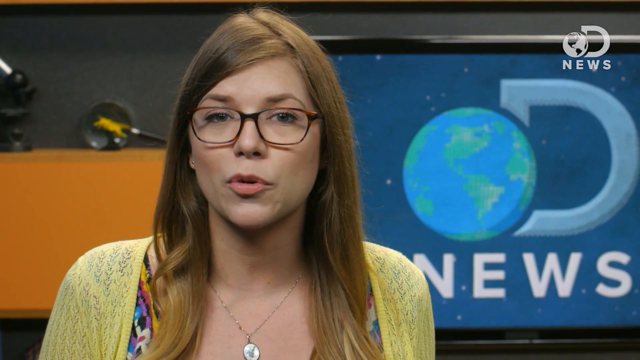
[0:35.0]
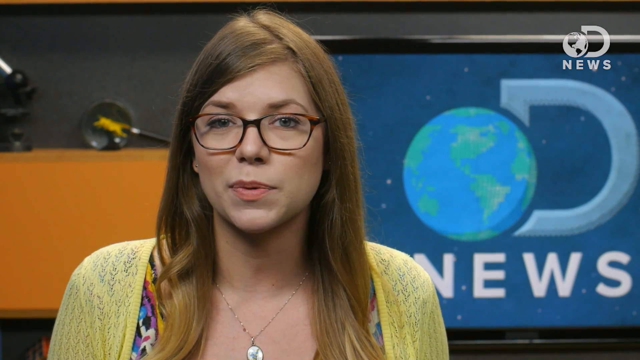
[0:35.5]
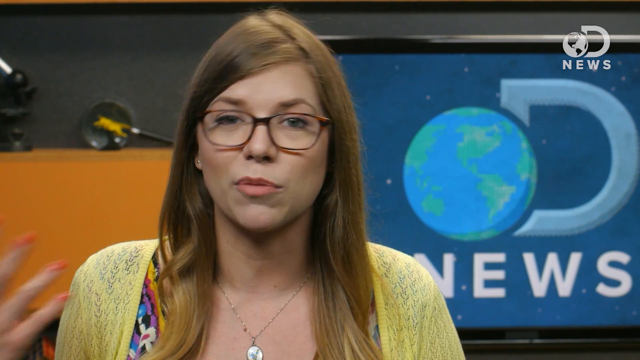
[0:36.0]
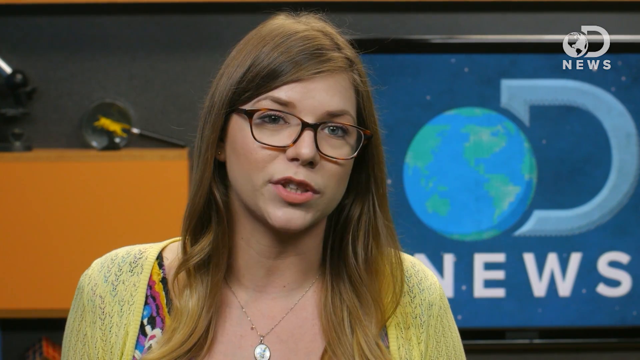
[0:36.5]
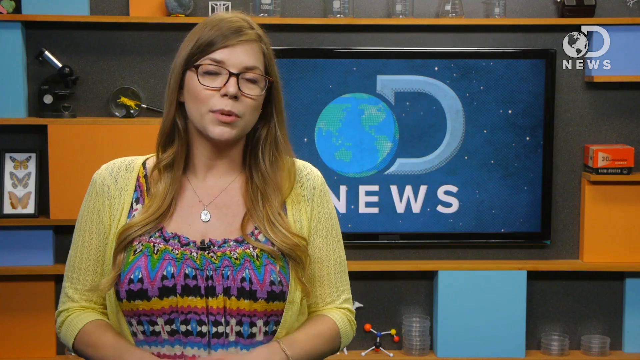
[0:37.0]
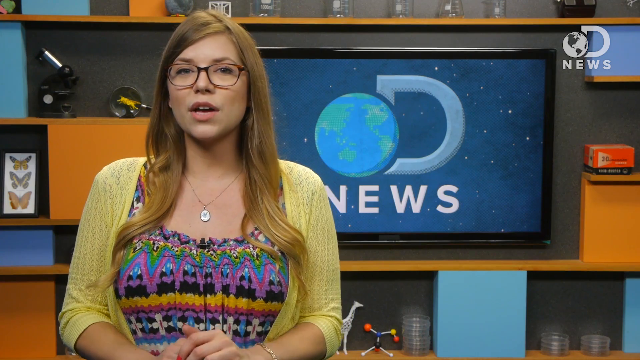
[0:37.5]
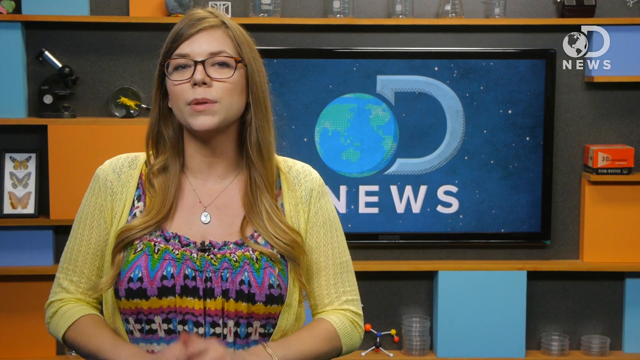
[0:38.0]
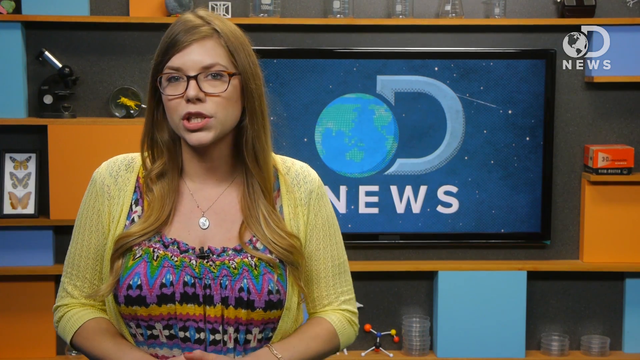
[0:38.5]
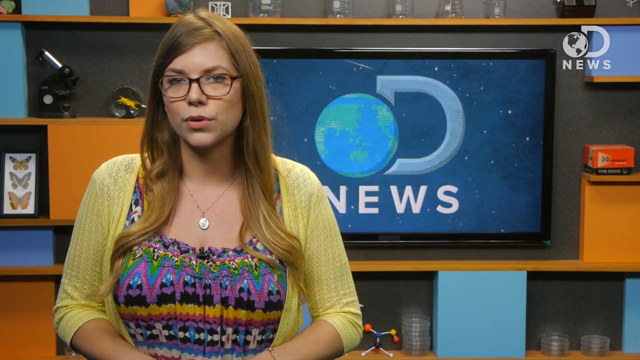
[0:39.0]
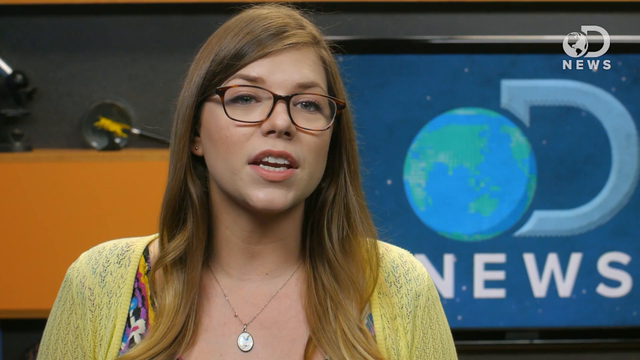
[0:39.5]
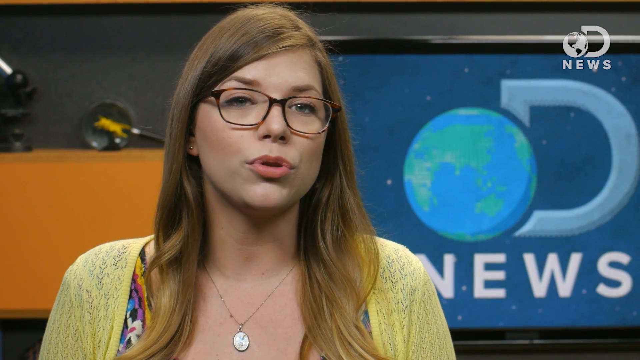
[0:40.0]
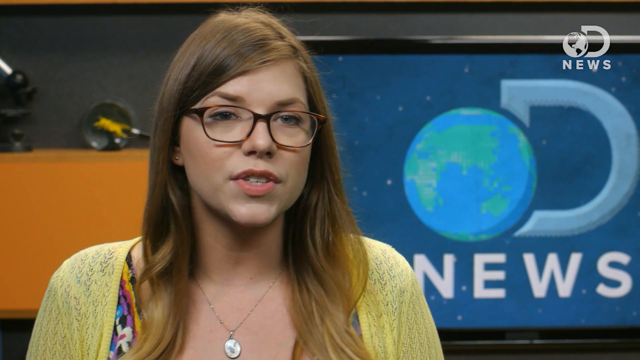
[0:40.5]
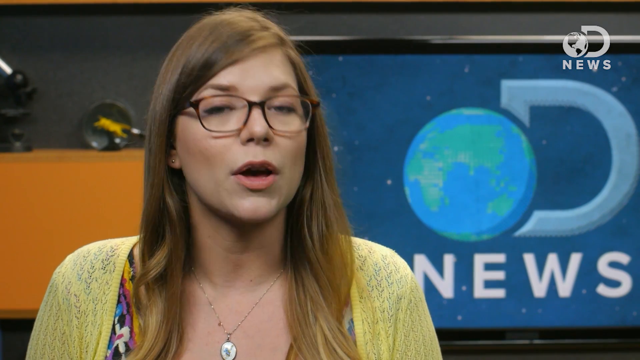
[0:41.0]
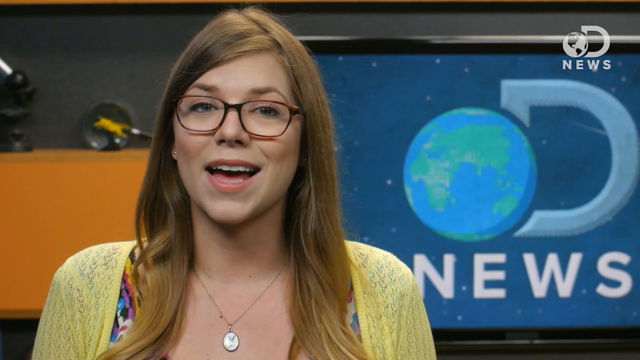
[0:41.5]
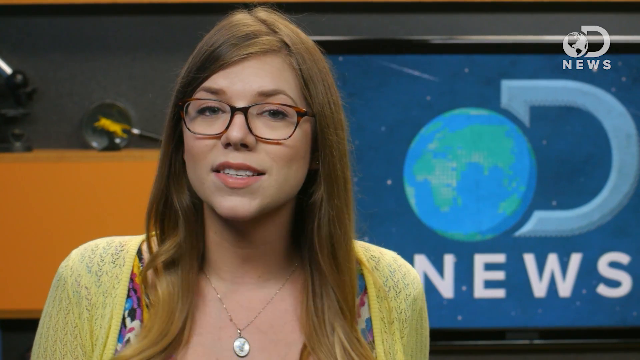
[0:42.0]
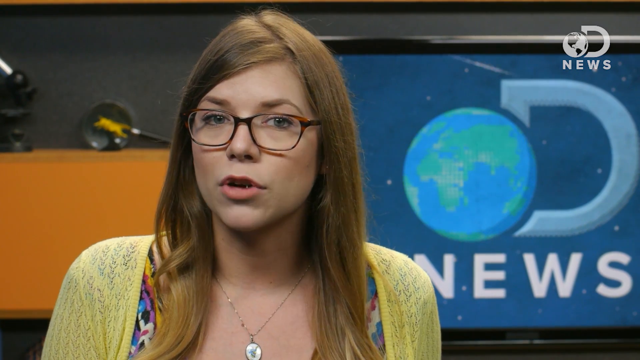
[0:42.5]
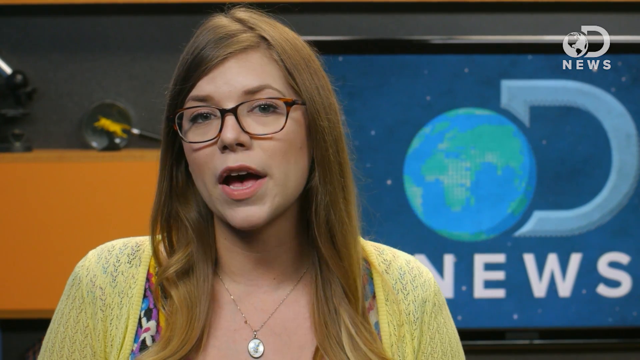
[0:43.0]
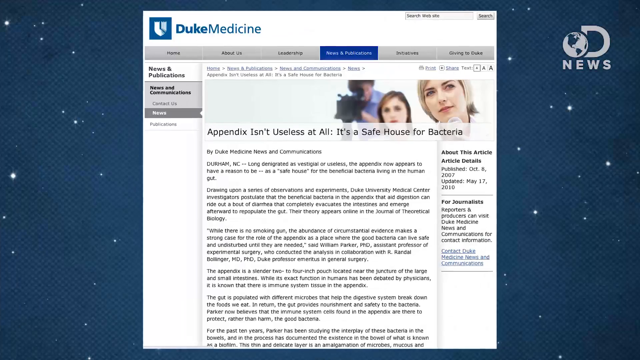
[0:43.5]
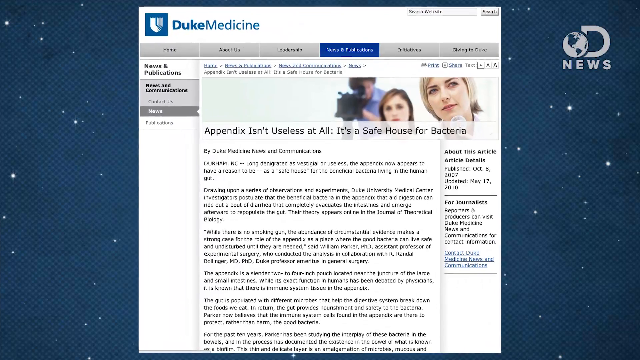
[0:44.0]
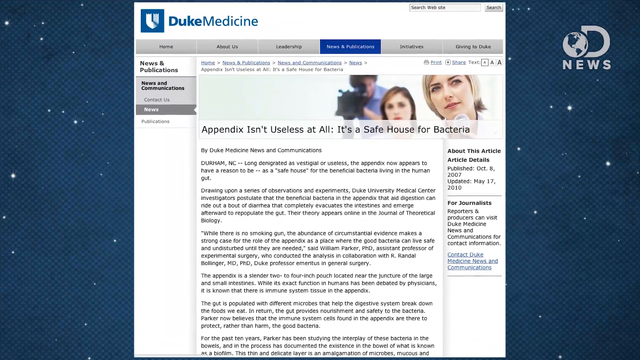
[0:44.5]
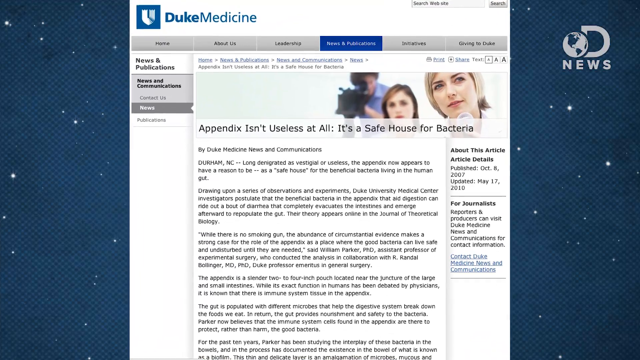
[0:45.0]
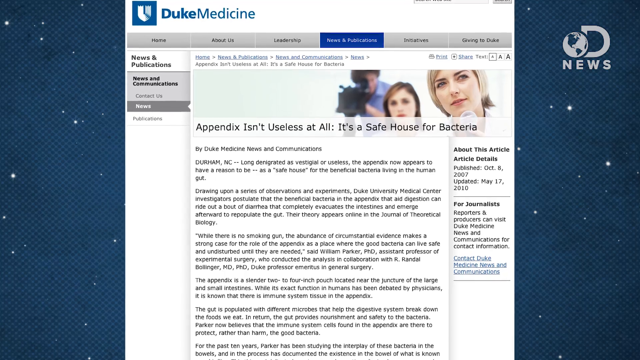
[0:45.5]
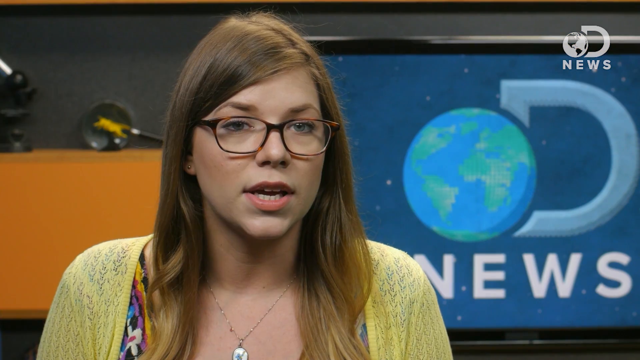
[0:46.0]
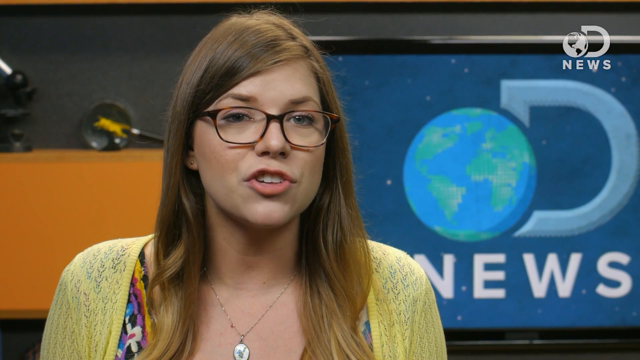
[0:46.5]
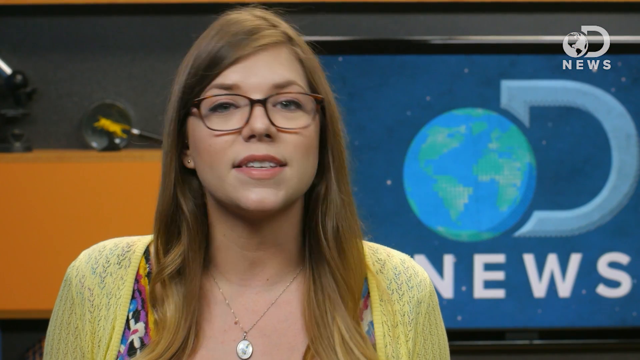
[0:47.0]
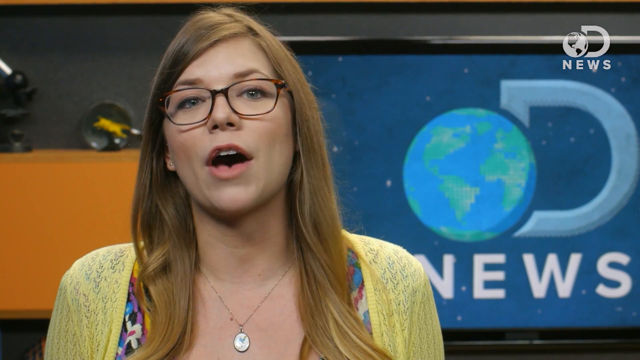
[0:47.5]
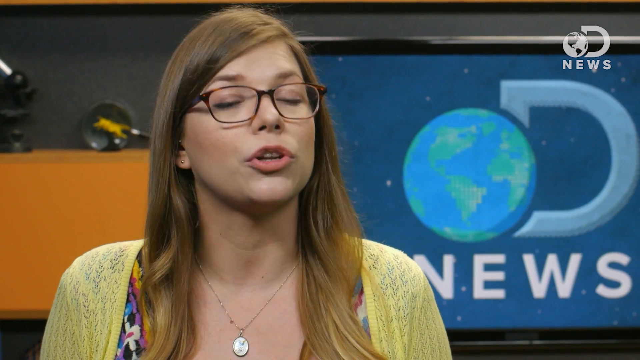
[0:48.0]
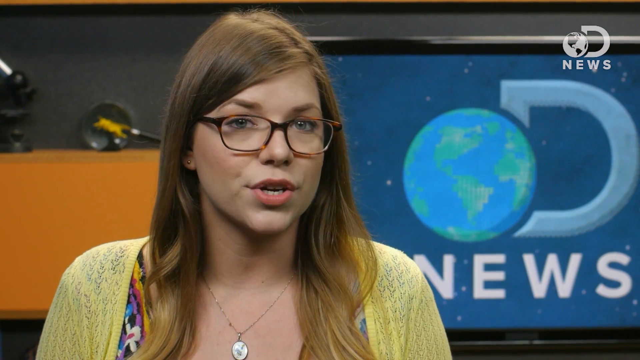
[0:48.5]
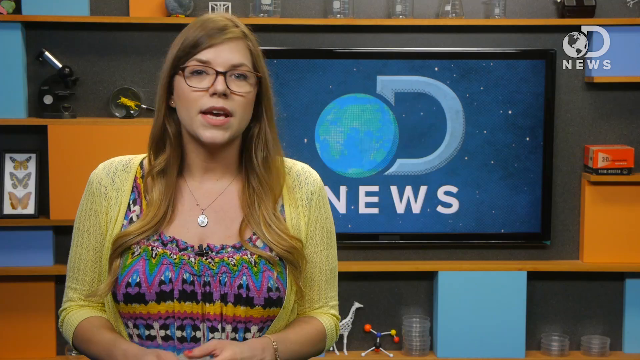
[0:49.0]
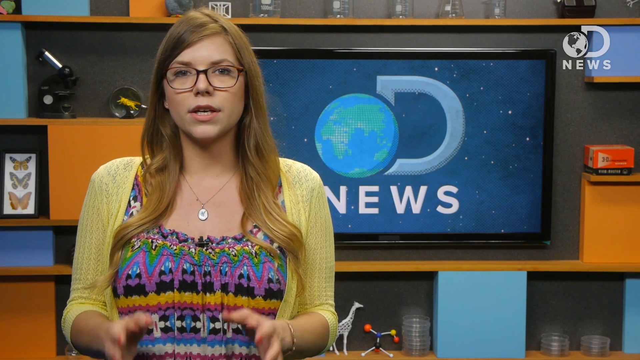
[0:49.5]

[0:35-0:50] An article from Duke University, Duke Medicine, pops up while the woman talks and smiles. The article is probably from a scientific journal and has a lot of small print about the appendix. It says "appendix isn't useless at all" and that it is a "safe house for bacteria". The woman has red painted fingernails, wears a bracelet on her left arm and a silver and gold necklace. The background behind her is a news channel.